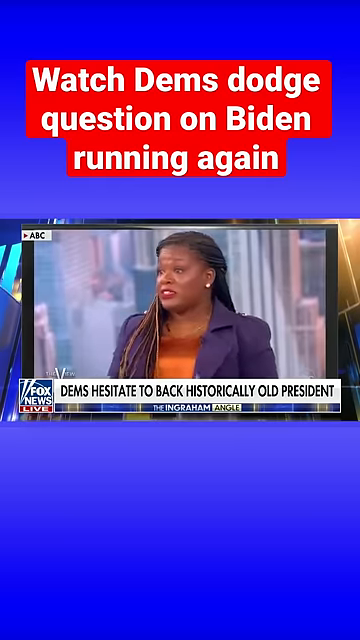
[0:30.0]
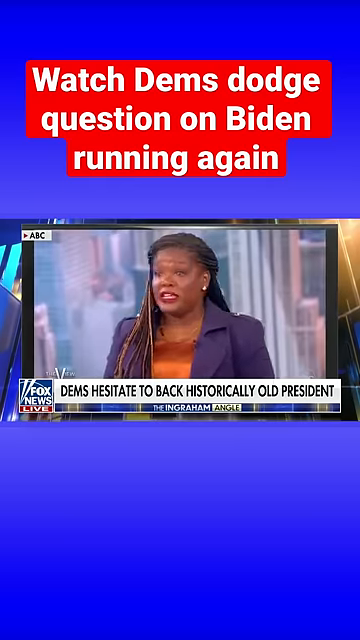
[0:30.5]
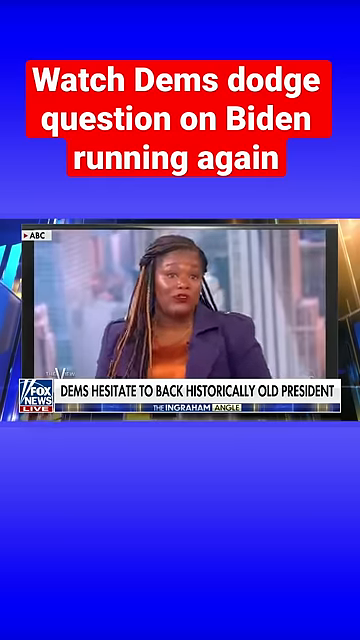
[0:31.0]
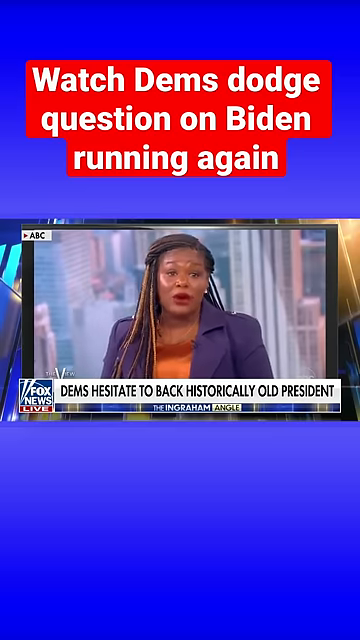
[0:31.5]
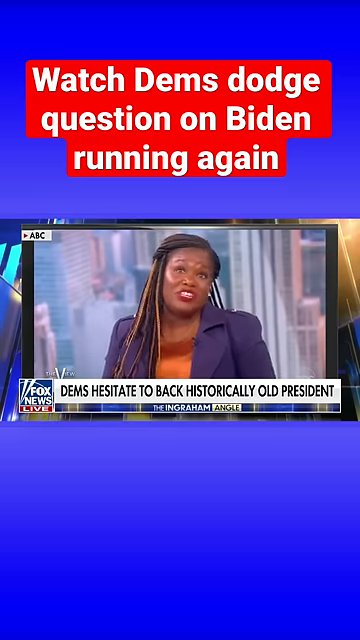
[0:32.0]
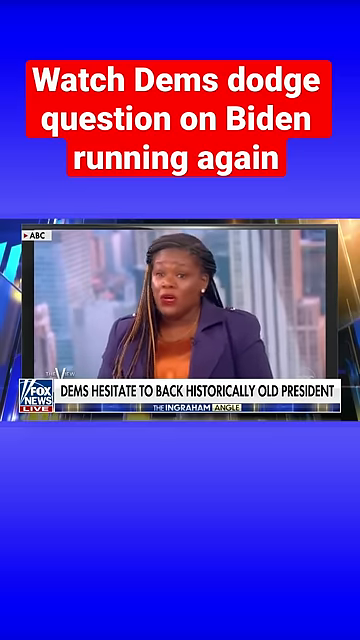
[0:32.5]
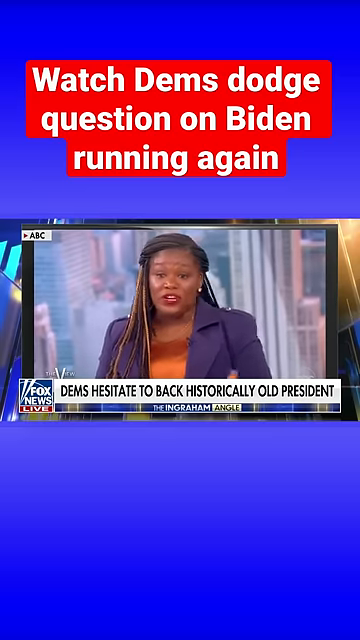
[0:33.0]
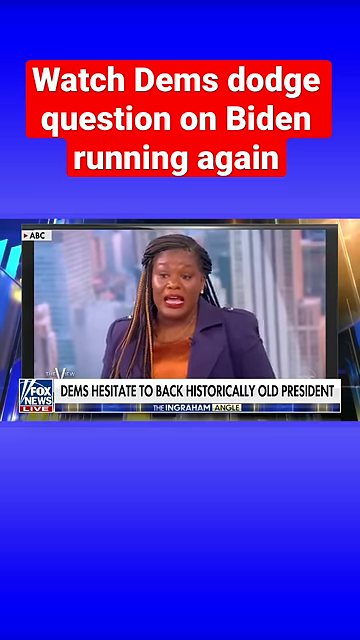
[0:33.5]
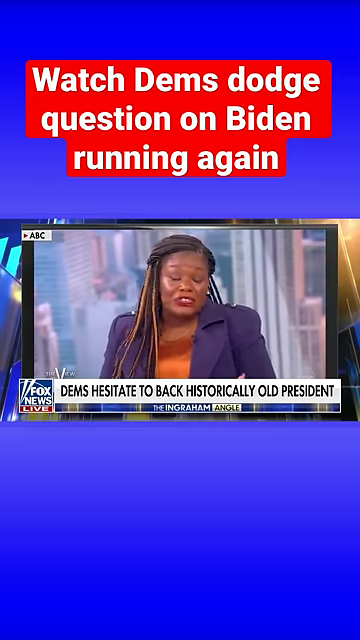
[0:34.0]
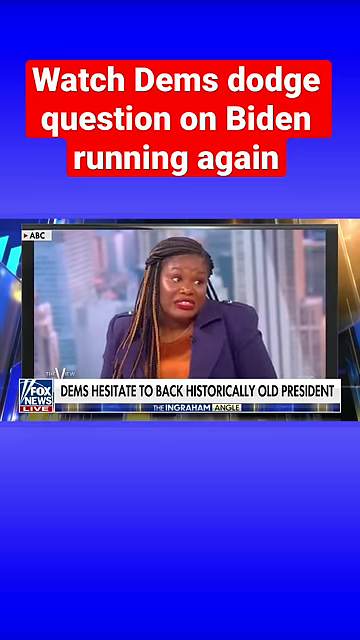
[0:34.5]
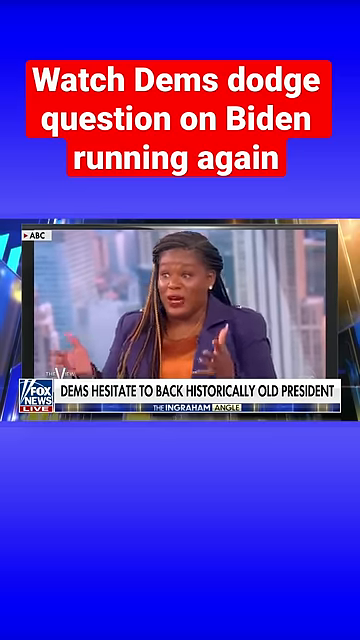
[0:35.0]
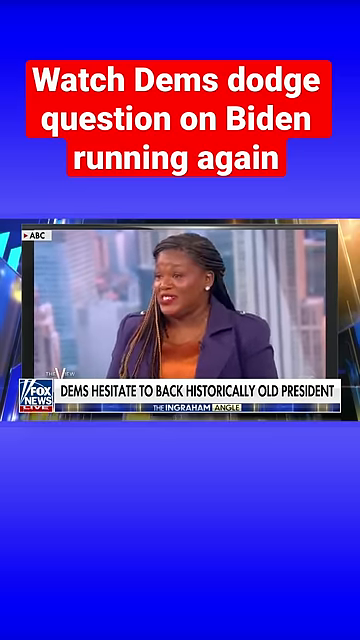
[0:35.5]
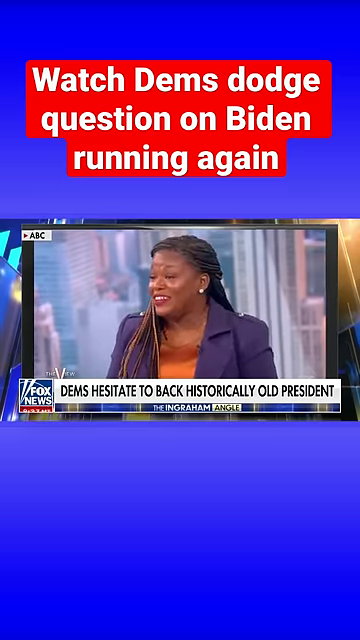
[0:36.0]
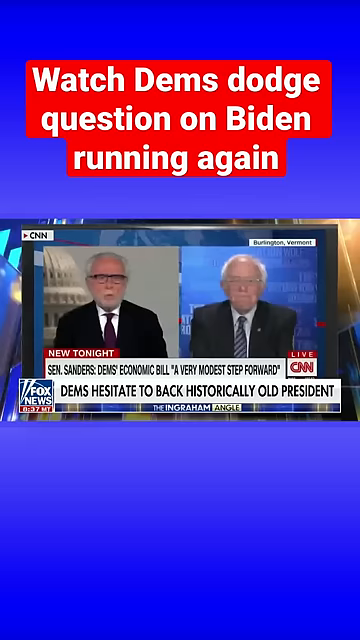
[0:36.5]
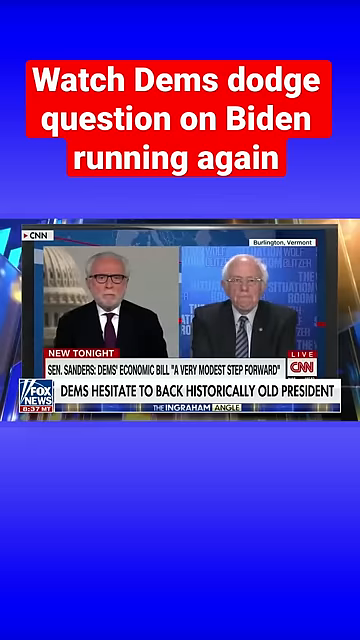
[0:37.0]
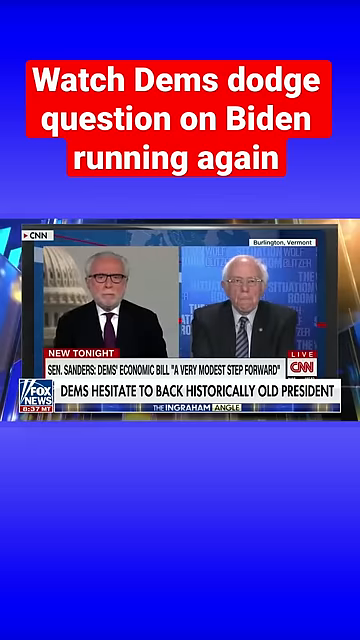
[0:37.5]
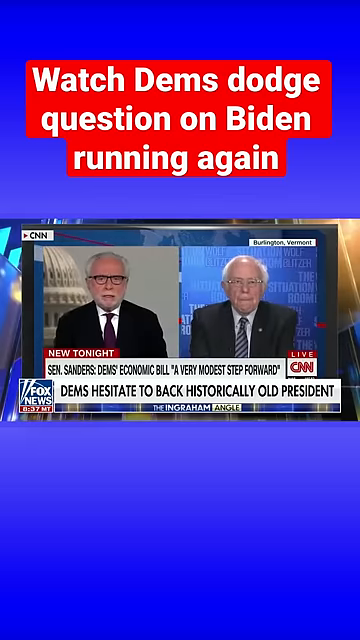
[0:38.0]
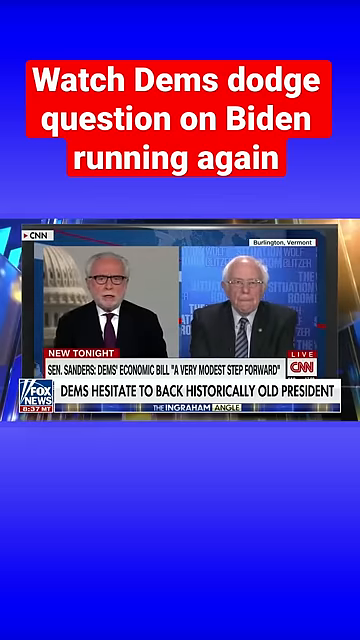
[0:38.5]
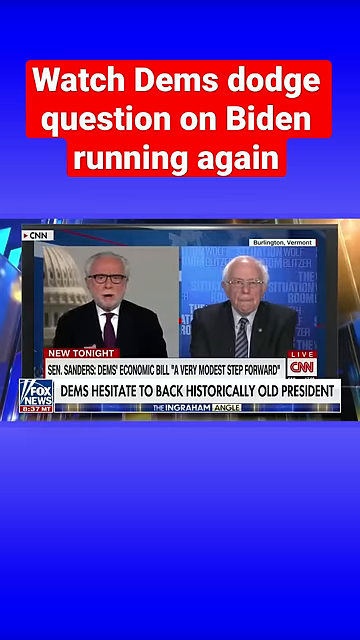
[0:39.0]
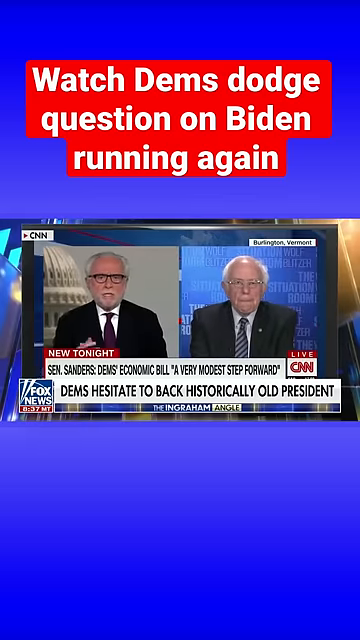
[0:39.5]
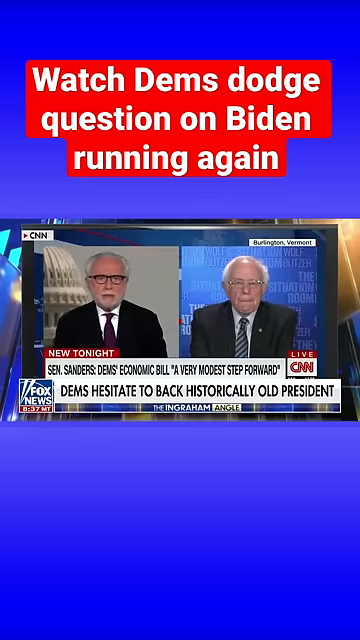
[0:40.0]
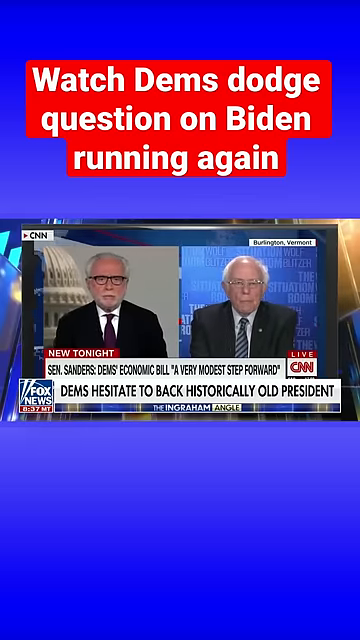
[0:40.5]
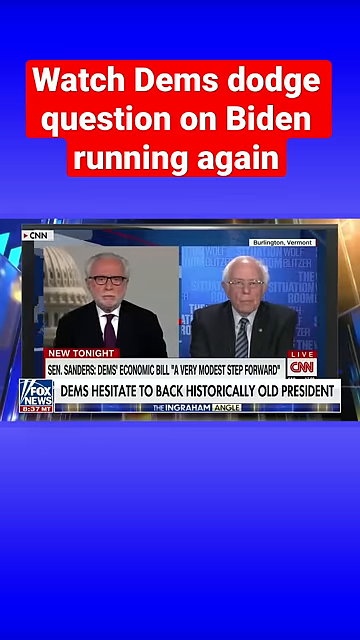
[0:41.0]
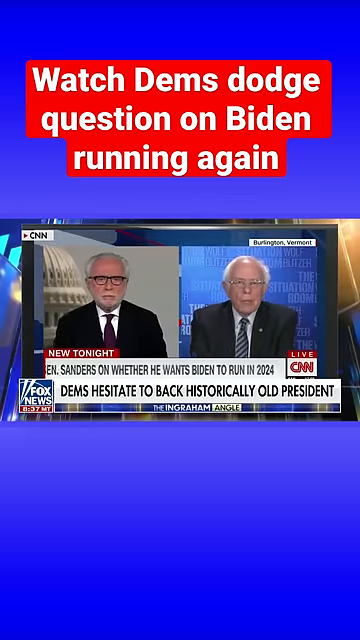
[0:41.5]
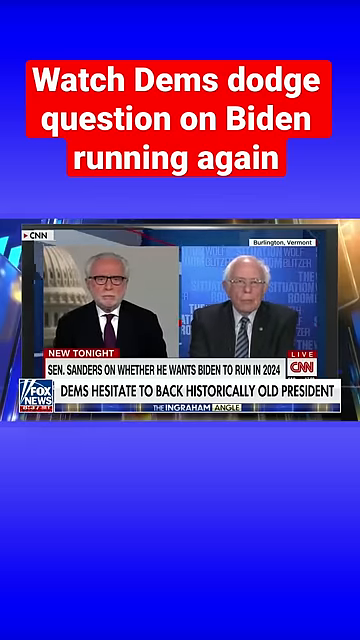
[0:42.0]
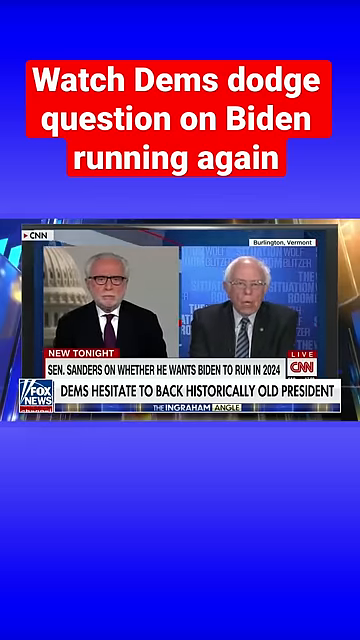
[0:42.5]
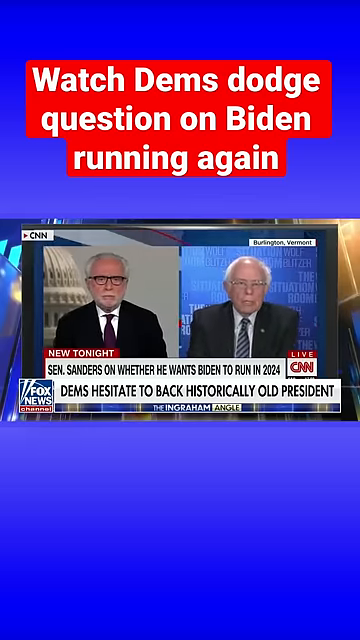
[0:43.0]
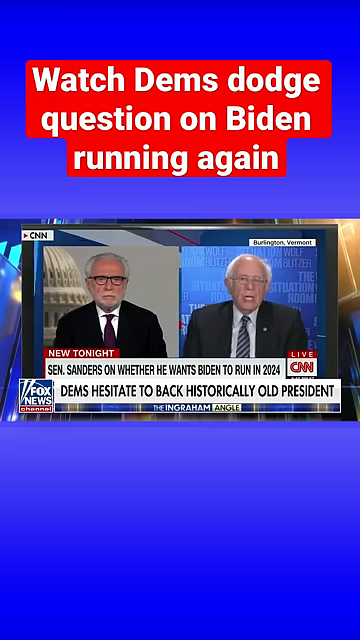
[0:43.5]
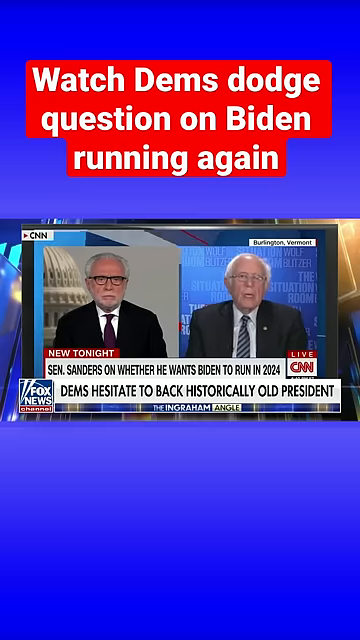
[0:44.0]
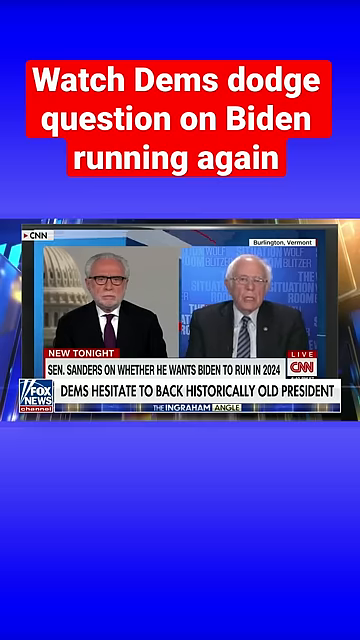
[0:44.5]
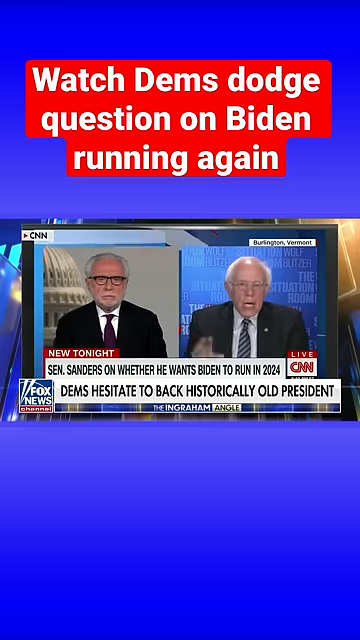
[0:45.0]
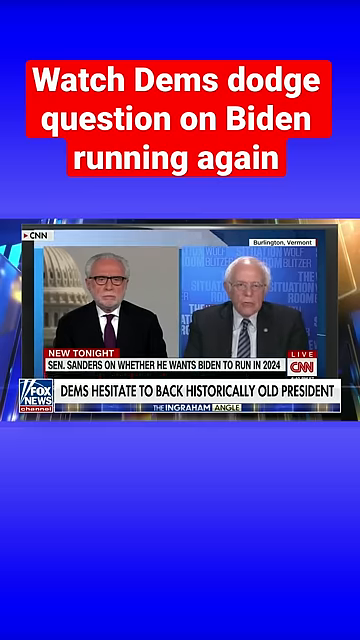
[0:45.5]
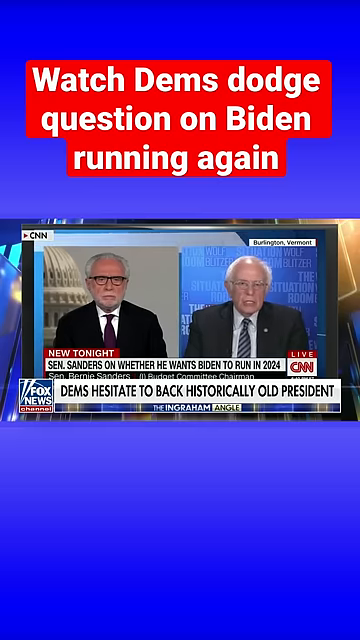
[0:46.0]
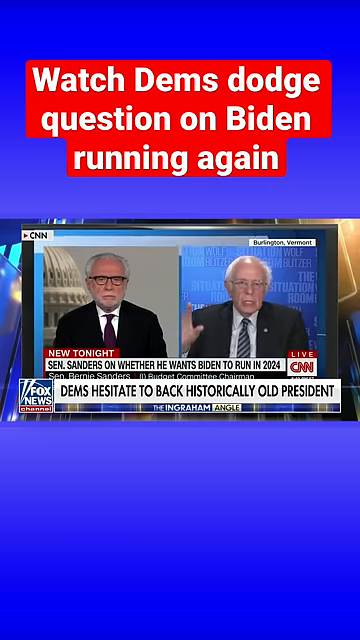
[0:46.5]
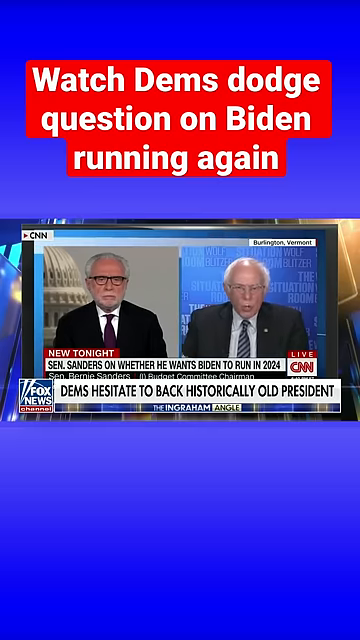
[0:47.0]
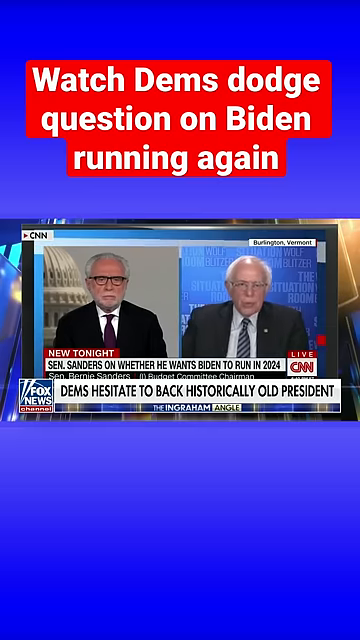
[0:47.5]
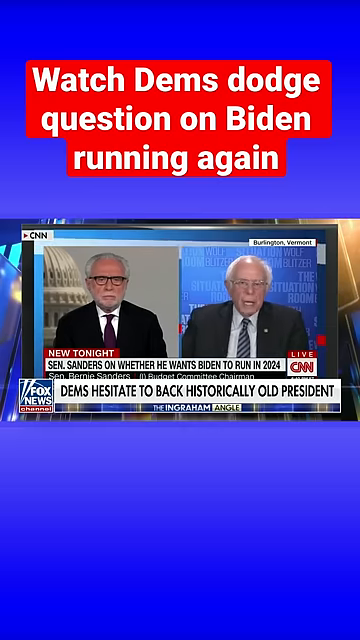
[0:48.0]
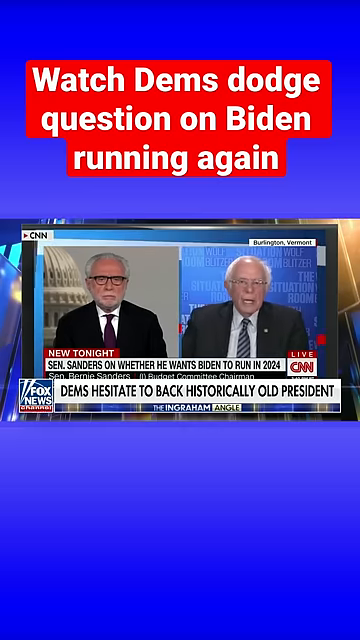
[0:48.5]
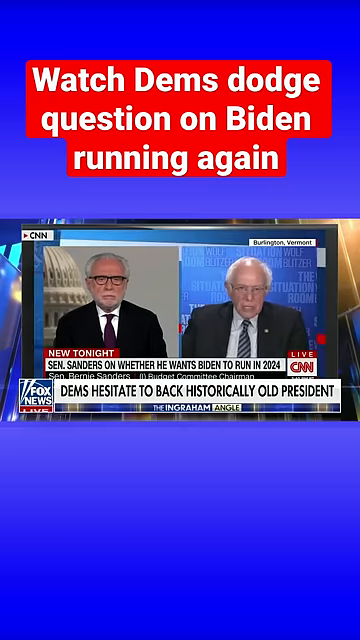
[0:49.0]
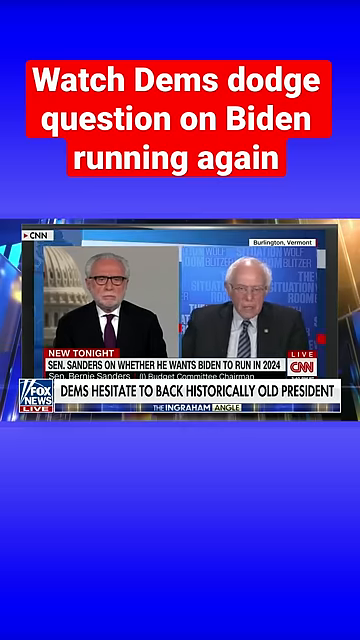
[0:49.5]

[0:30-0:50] An on-screen headline about Senator Sanders and an economic bill includes the words "a very modest step forward." The broadcast is live on CNN out of Burlington, Vermont, and Senator Bernie Sanders is identified as the budget committee chairman.